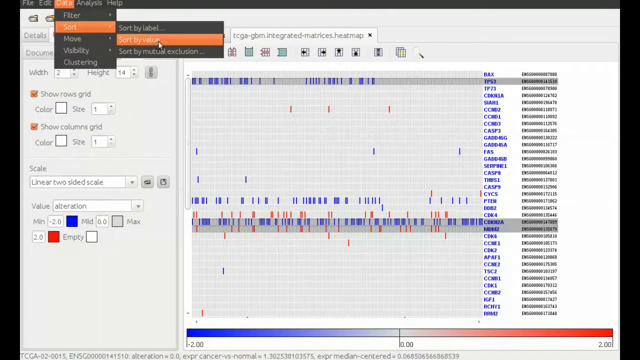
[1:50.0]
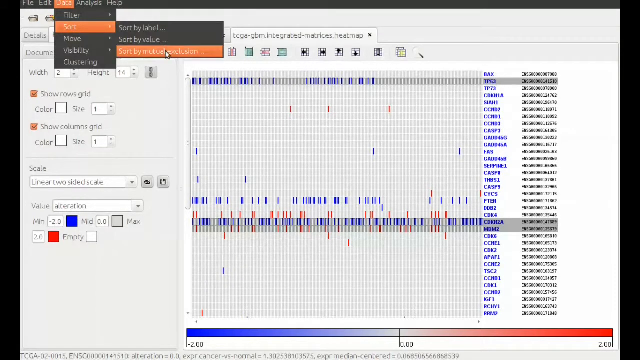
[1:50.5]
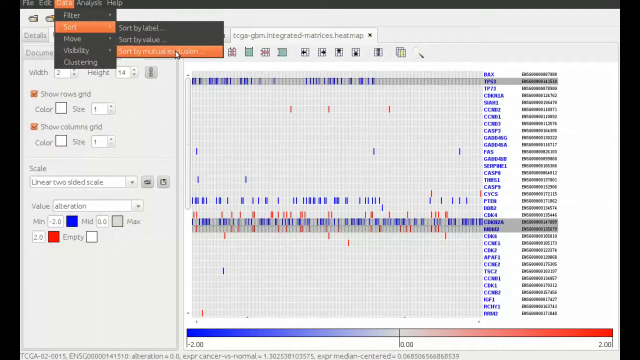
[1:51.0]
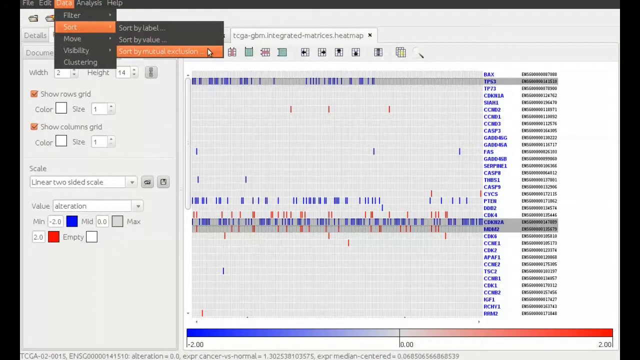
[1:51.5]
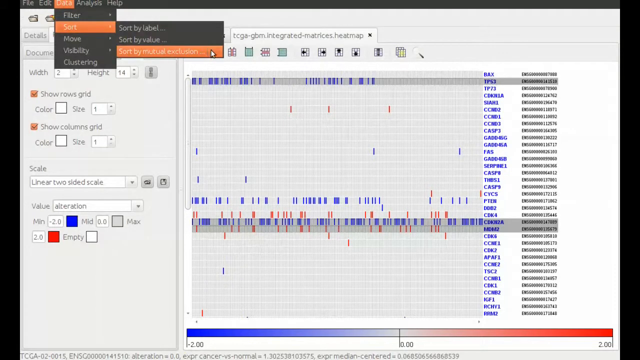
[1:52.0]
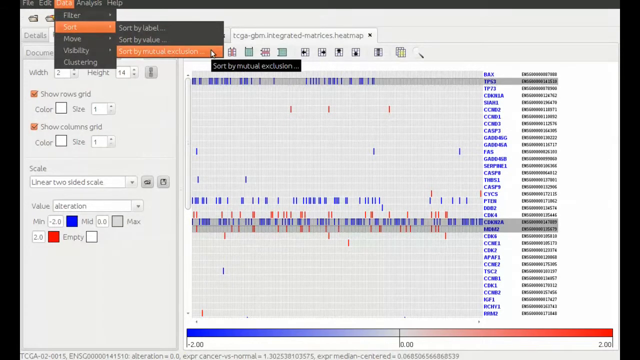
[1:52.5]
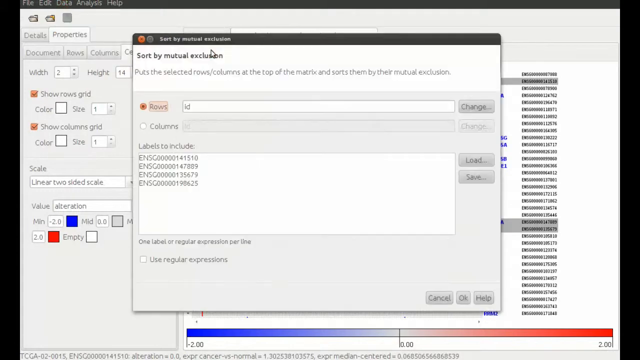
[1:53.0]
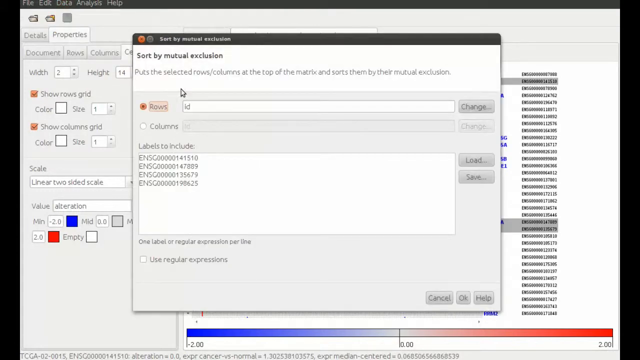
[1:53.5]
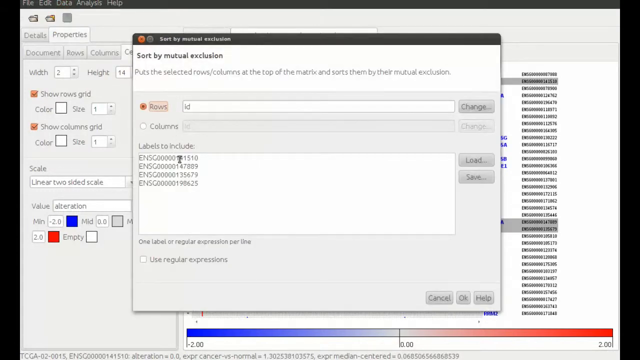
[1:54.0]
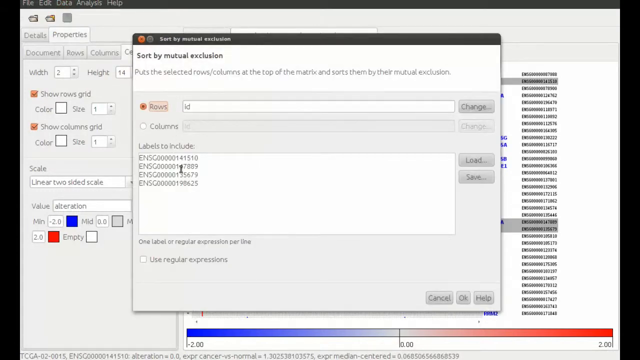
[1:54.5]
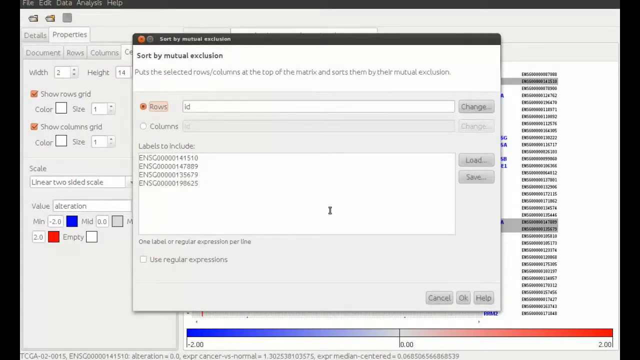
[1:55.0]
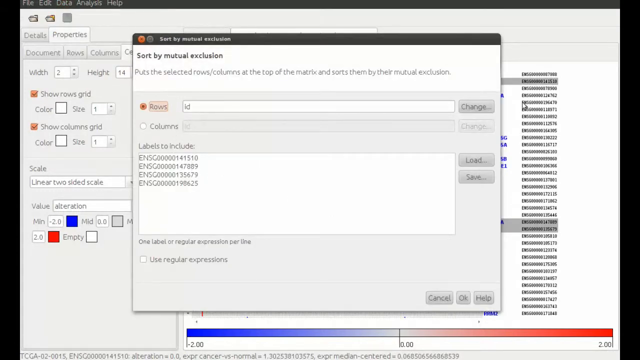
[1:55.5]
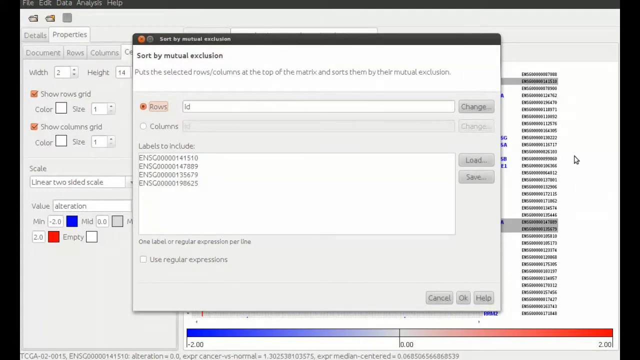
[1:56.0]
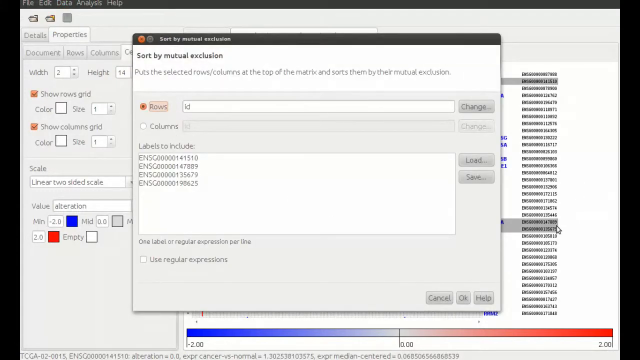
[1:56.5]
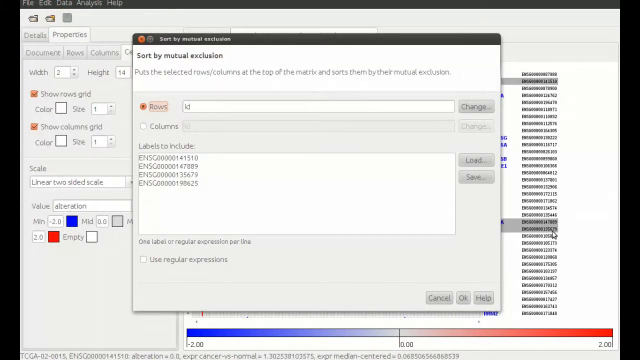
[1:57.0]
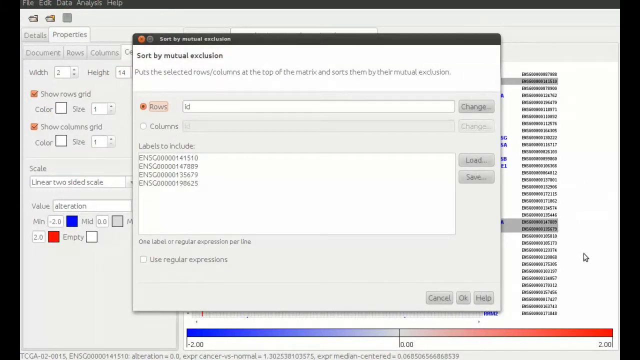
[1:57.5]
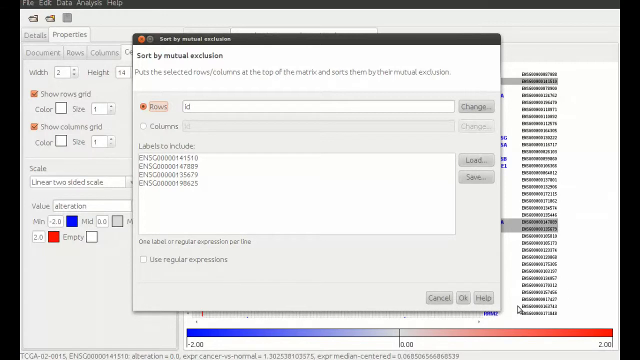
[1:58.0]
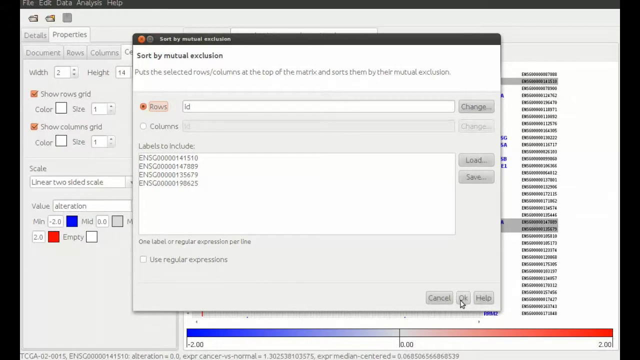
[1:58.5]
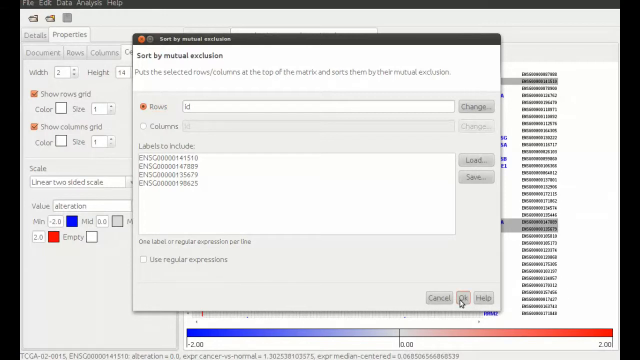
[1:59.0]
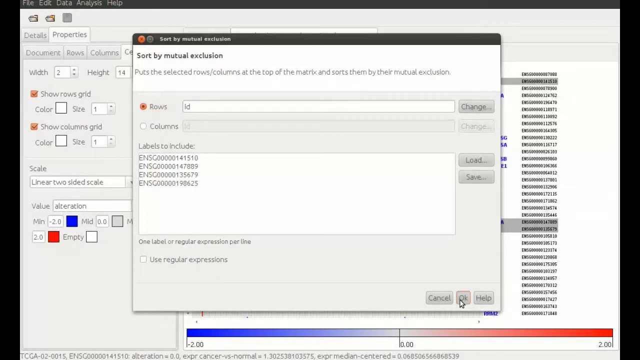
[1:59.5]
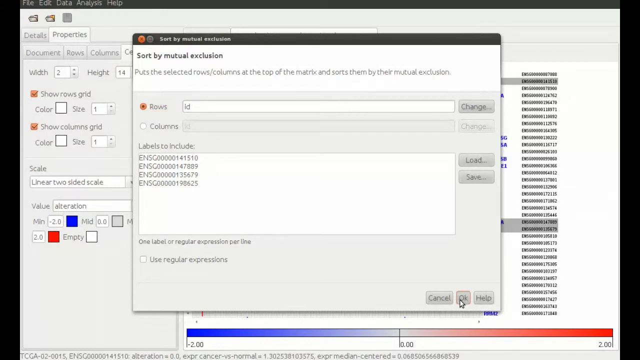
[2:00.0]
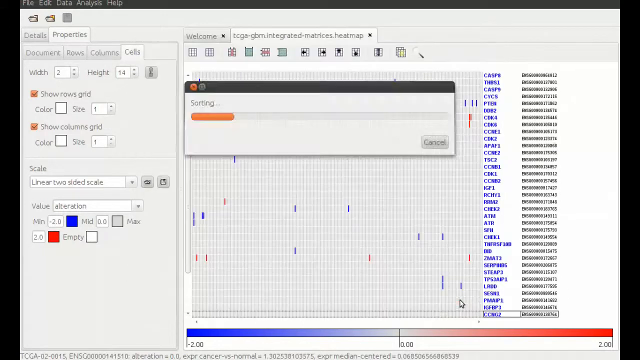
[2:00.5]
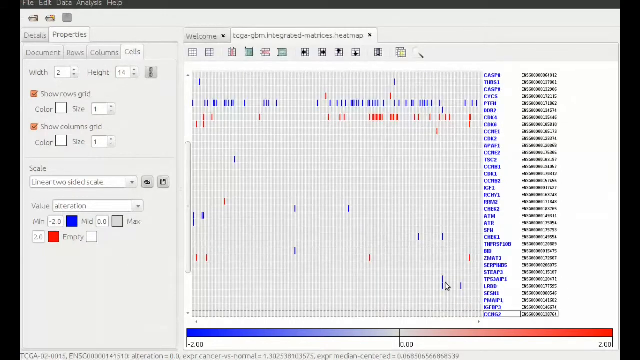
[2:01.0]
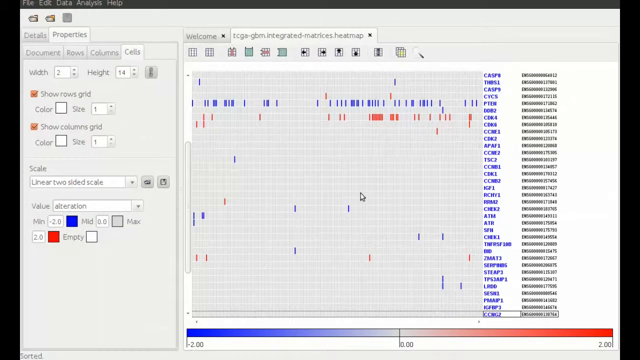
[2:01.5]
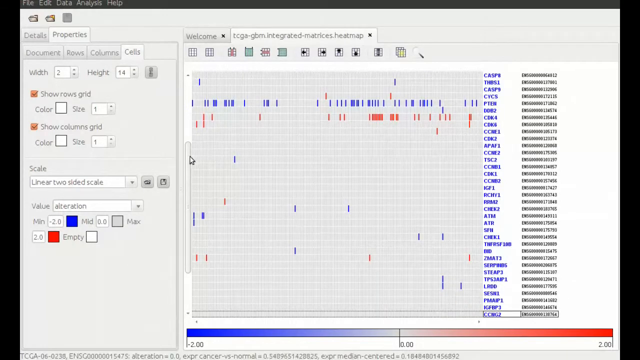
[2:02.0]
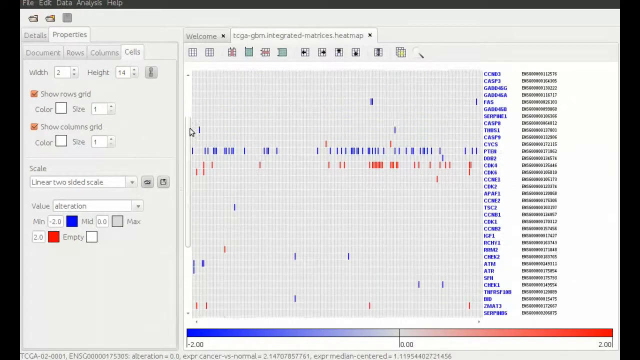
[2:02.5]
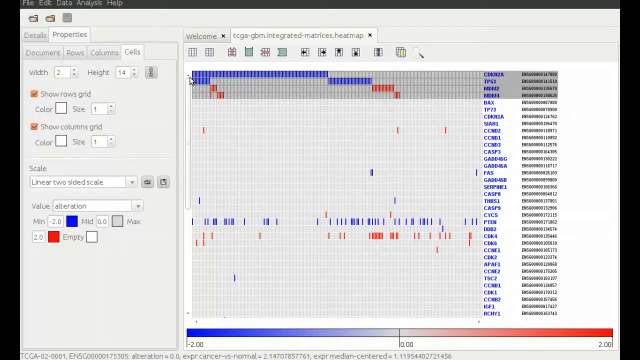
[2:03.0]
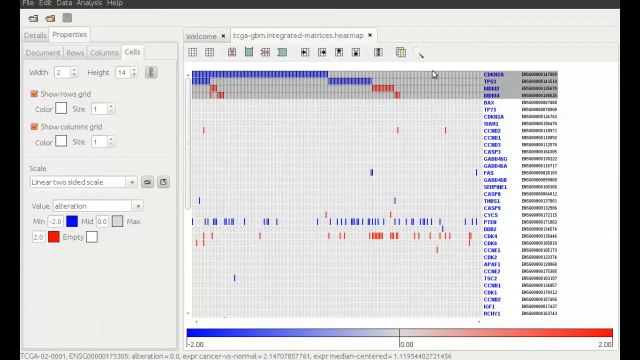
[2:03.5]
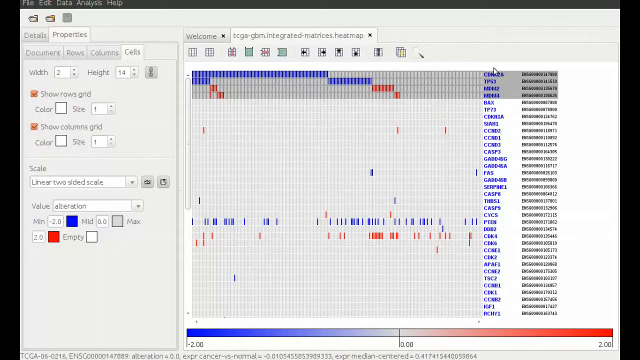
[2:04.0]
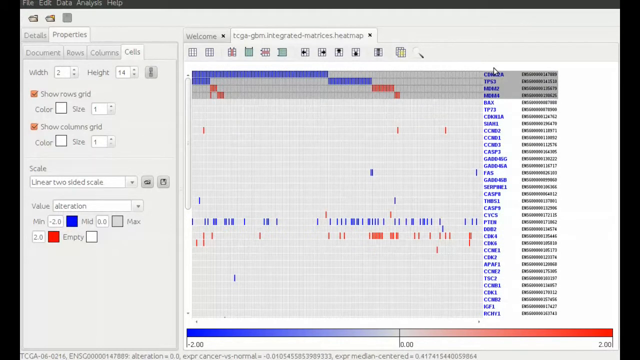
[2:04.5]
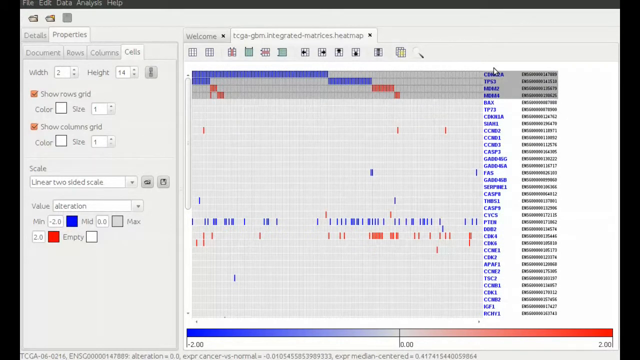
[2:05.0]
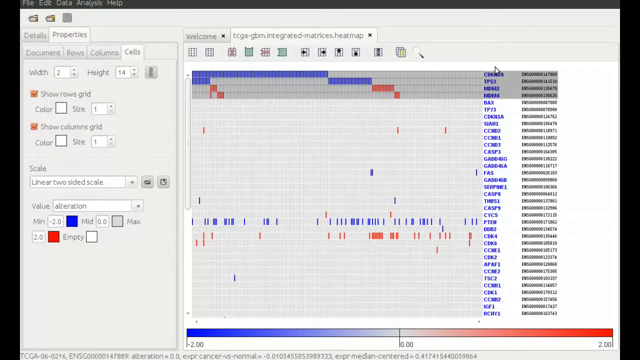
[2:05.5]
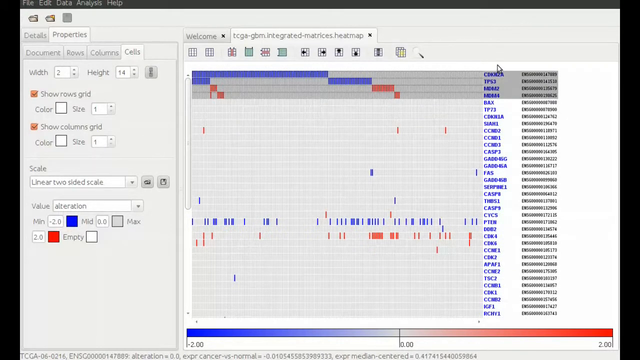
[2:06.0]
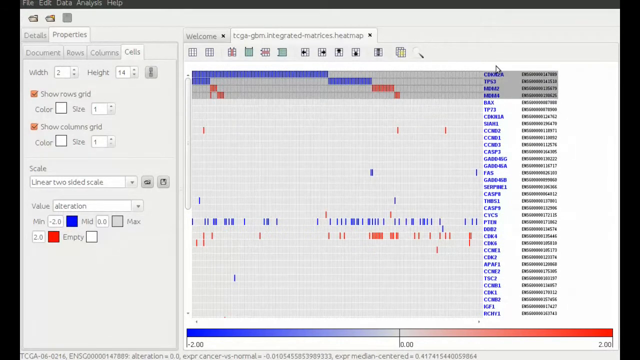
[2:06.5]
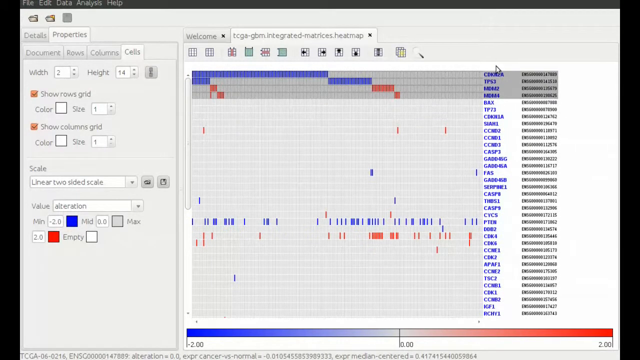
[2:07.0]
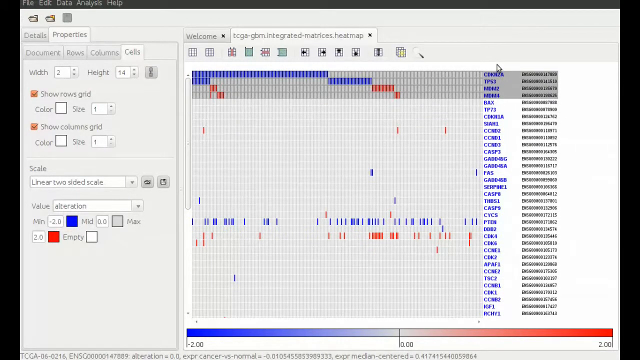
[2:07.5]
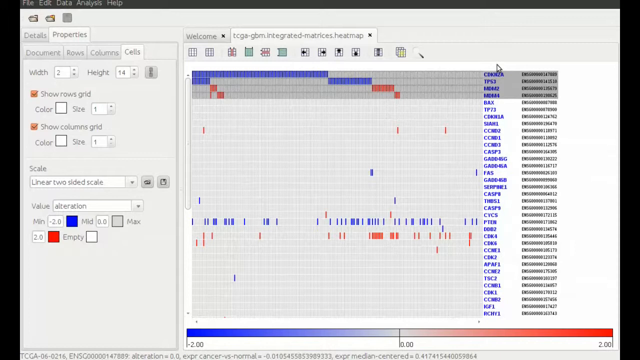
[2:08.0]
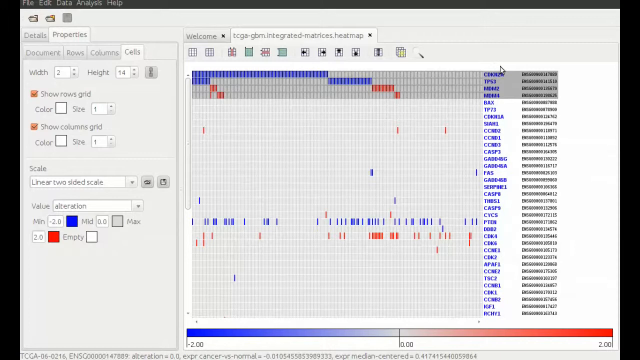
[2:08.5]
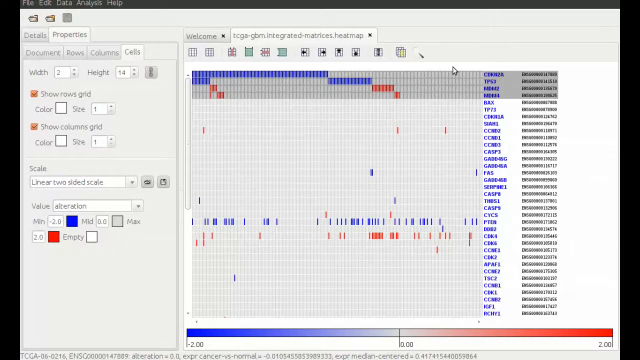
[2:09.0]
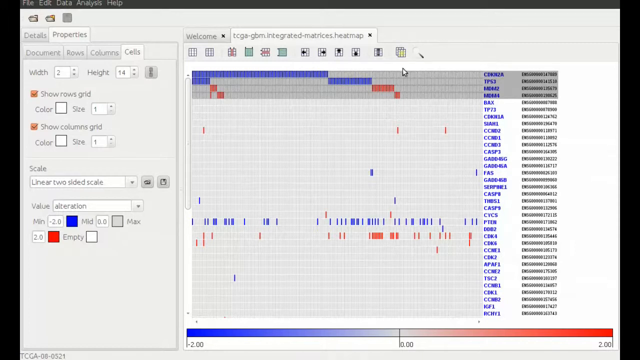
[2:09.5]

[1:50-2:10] The sort submenu shows the options sort by label, sort by value and sort by mutual exclusion, and the user selects the last one. This opens the sort by mutual exclusion window, with a section listing the four just-selected labels as the labels to include. The user hits OK and scrolls back up in the heat map tab, which now shows the four selected labels, CDKN2A, TP53, MDM2 and MDM4, at the top of the heat map. The top two labels have predominantly blue rectangular boxes filling the left side of the heat map, while the two labels underneath have a sparse amount of red rectangular boxes.